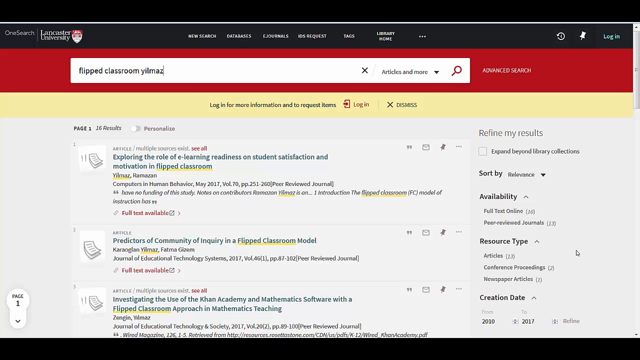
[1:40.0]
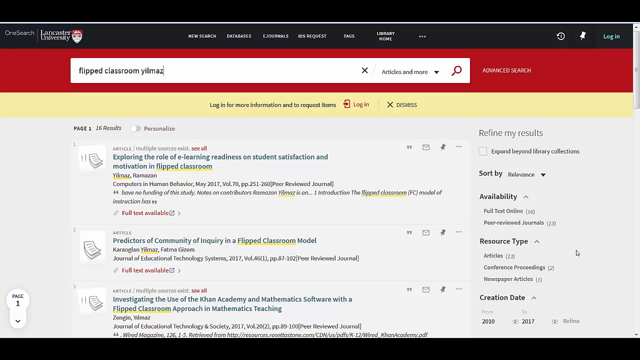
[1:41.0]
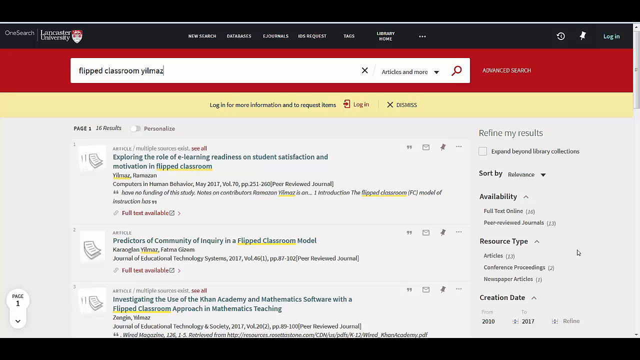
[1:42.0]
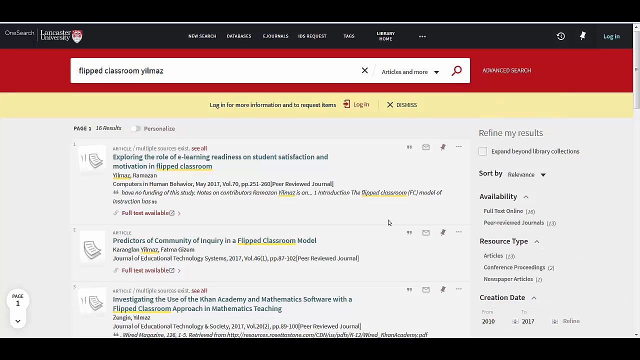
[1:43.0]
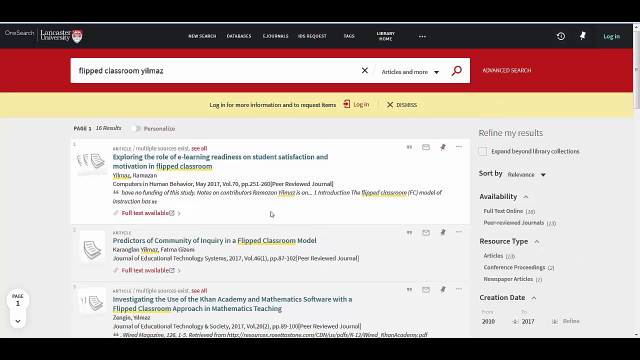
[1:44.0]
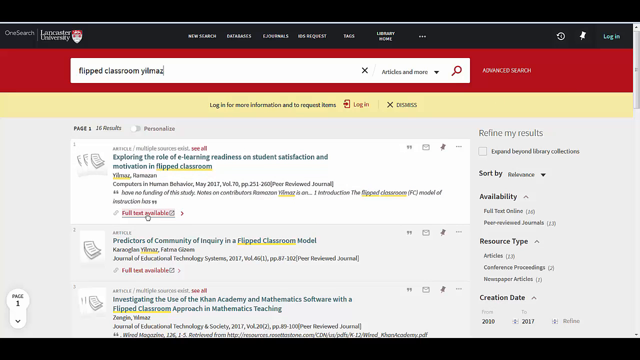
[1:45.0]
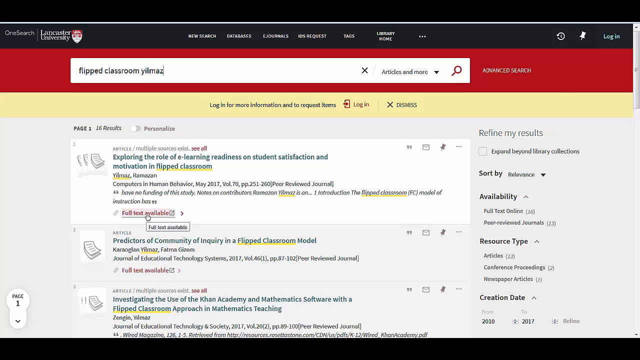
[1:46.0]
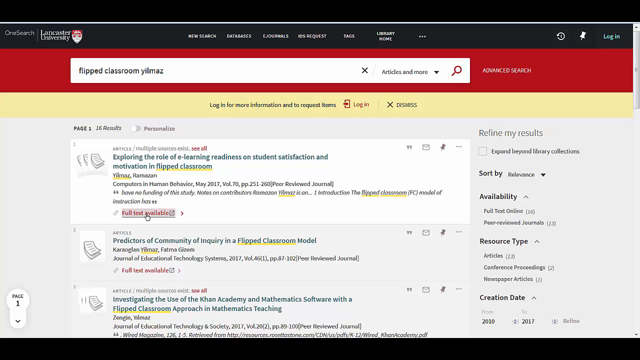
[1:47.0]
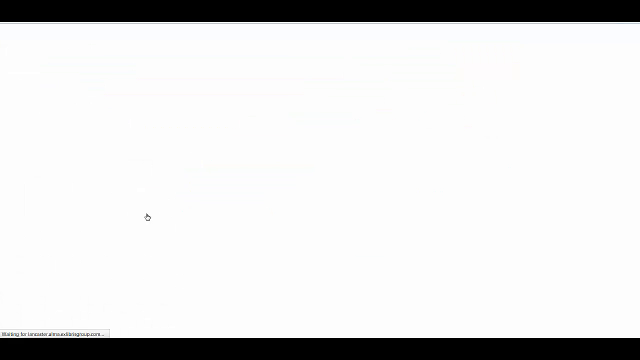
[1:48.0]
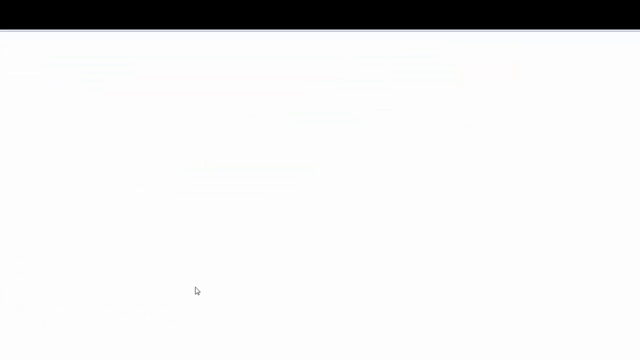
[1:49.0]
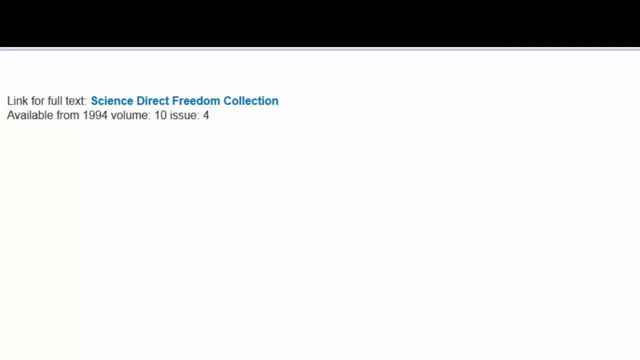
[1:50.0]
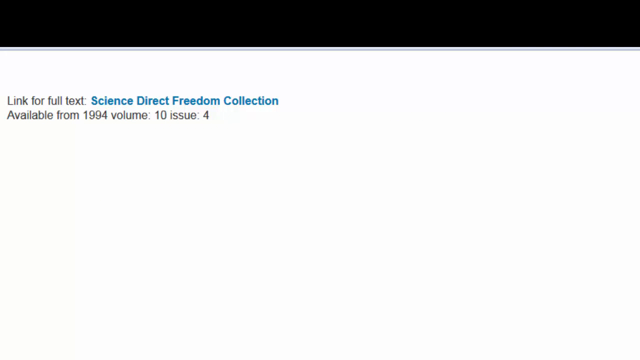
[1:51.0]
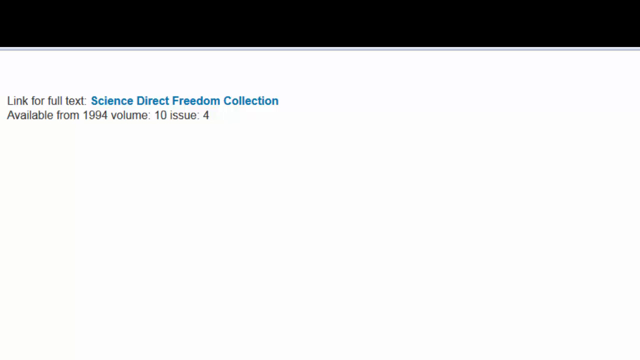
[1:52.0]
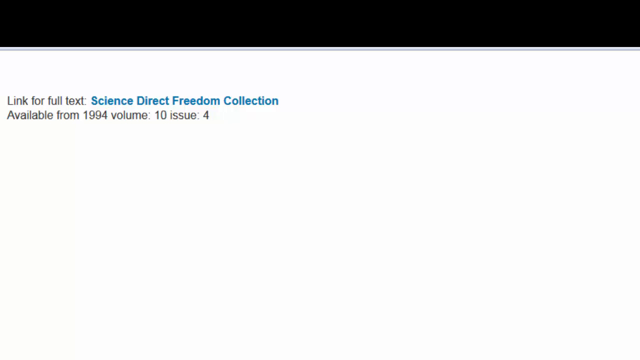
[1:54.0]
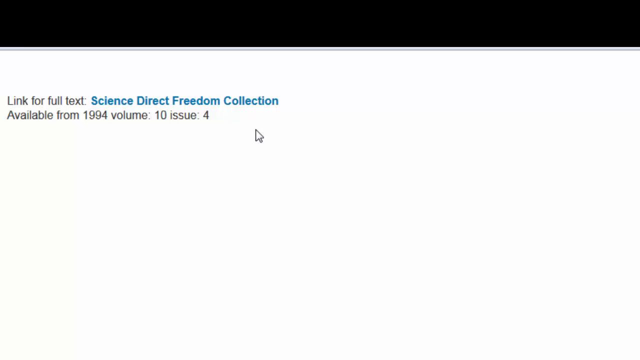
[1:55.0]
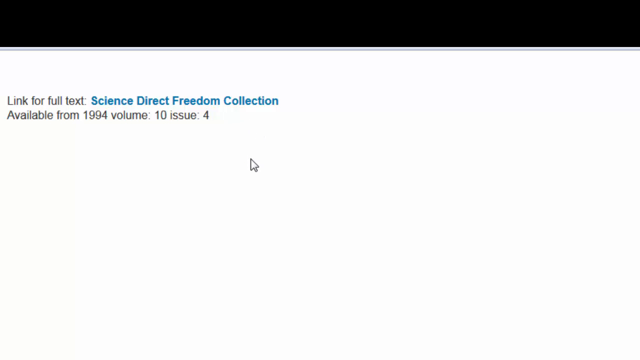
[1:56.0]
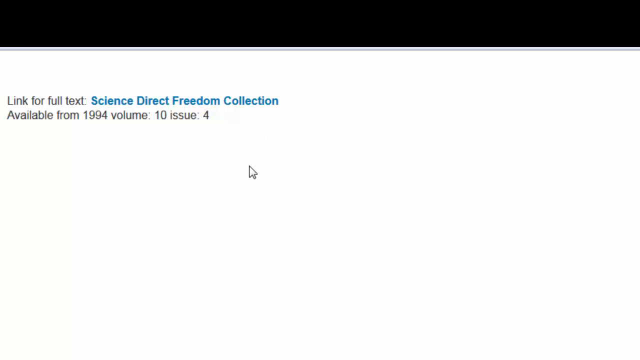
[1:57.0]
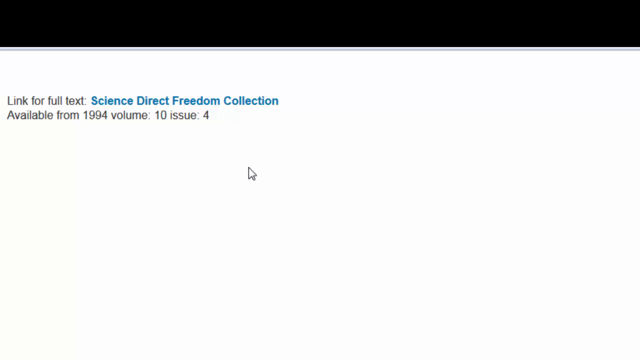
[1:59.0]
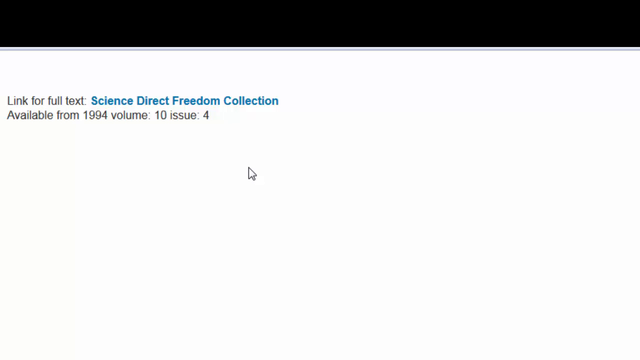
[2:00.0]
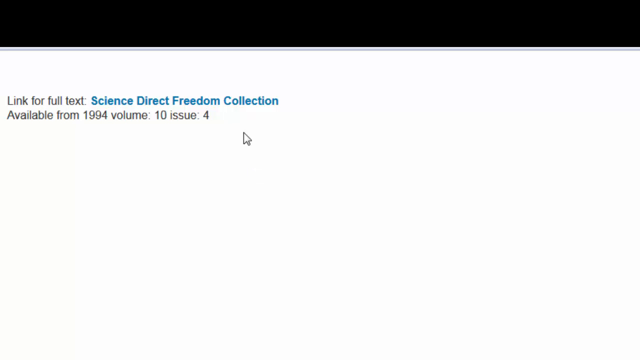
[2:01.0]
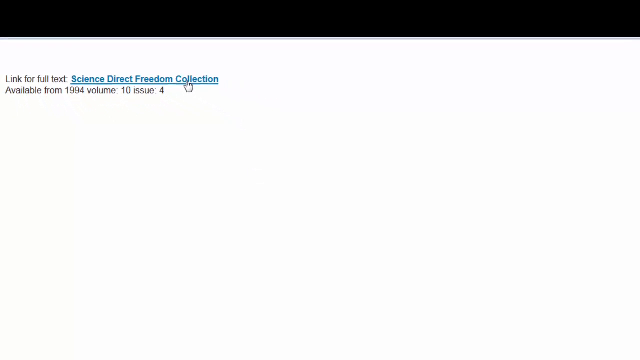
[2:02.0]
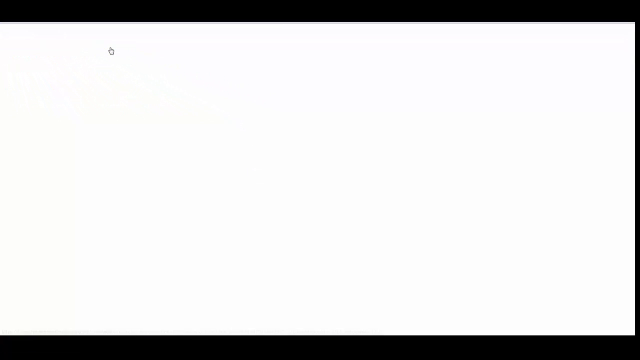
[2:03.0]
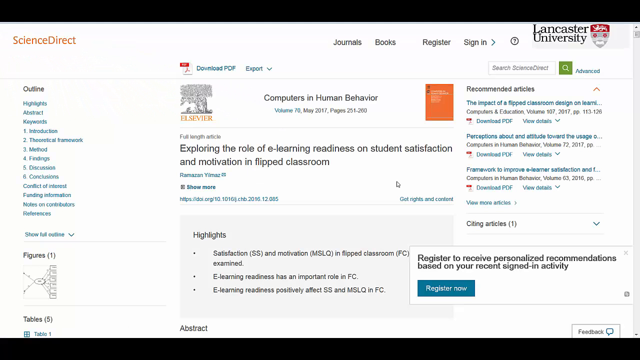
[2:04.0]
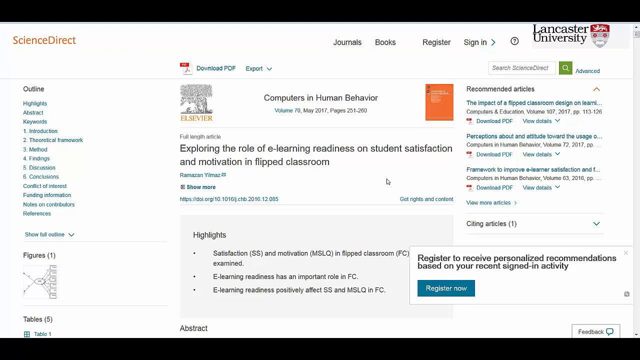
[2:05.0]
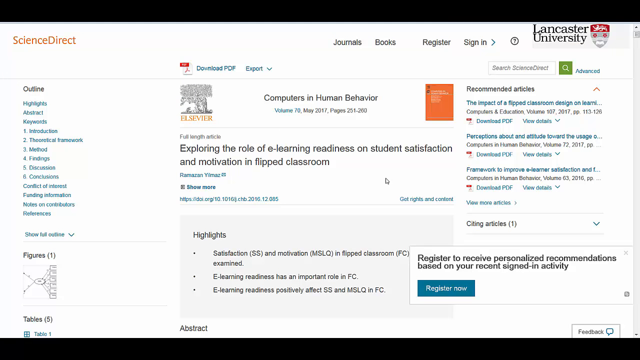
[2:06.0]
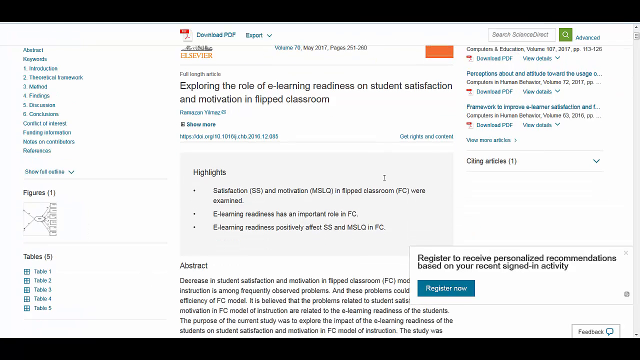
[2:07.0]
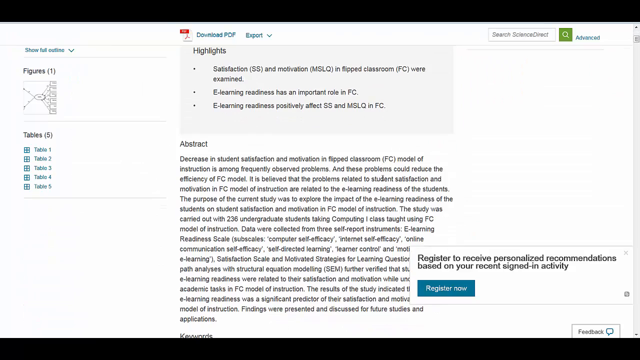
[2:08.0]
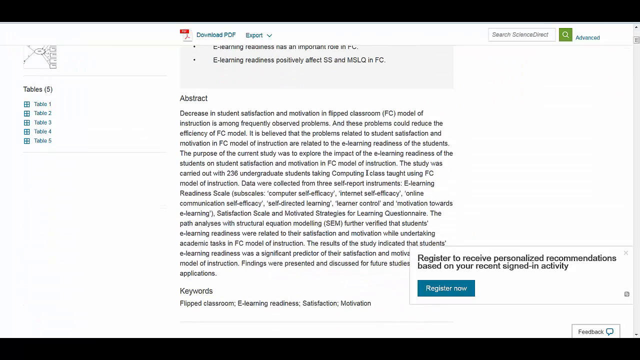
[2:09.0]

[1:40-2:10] A website page has a search bar at the top in which the words "flipped classroom Yilmaz" have been entered. Underneath, three articles pulled up by the search are listed. The top one reads "exploring the role of e-learning readiness on student satisfaction and motivation in flipped classroom"; the one beneath it is headed "predictors of community of inquiry in a flipped classroom model", and there is a third below that. The mouse moves about the screen and chooses one of the articles. The next page shows the words "link for full text" and, in a darker, brighter blue, "Science Direct Freedom Collection". Underneath are the words "available from 1994, volume 10, issue four".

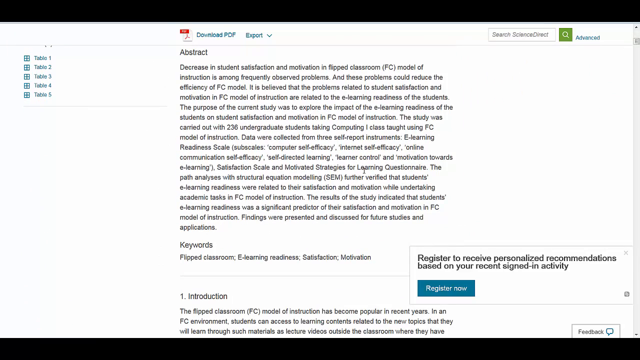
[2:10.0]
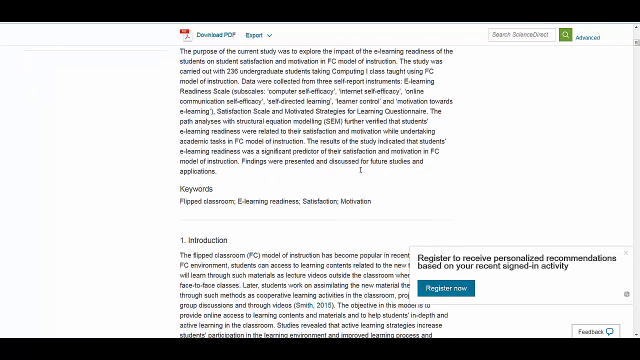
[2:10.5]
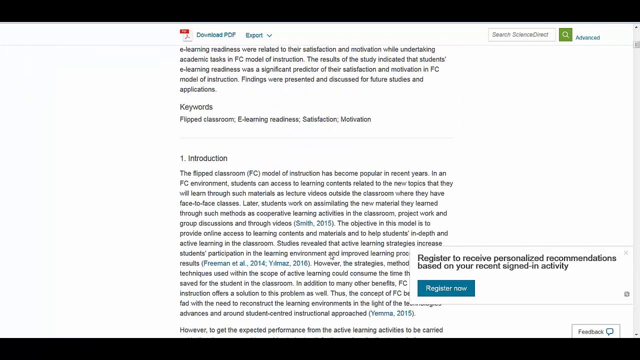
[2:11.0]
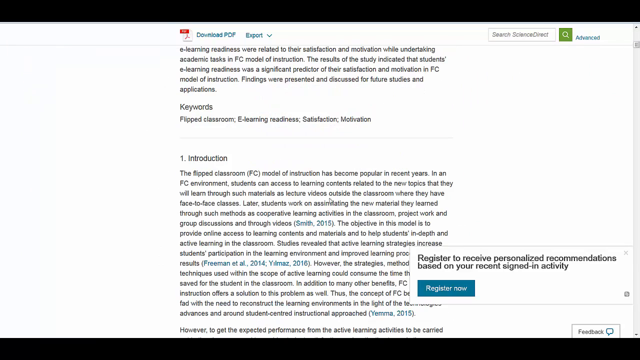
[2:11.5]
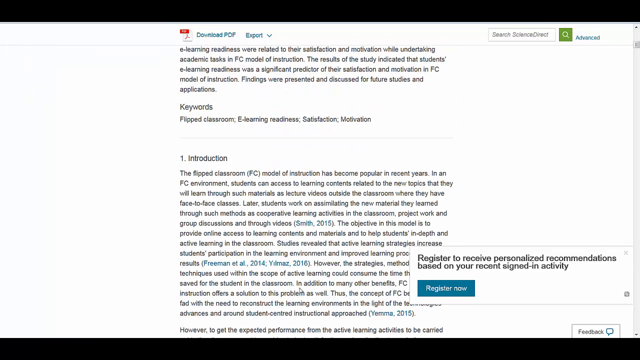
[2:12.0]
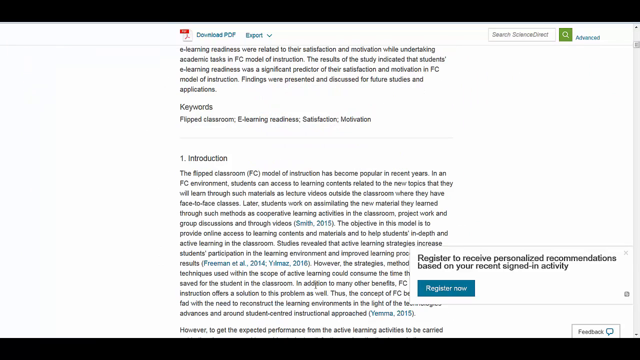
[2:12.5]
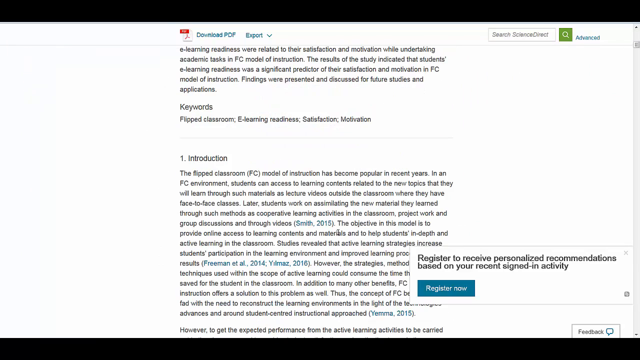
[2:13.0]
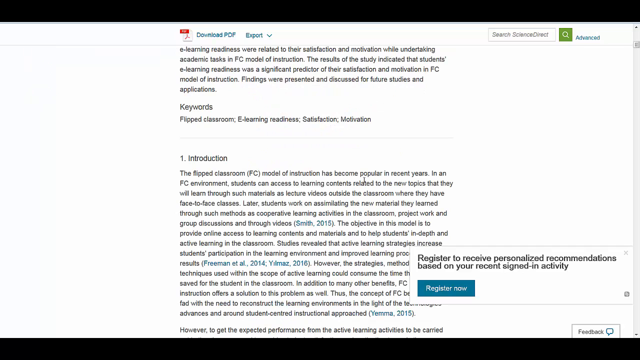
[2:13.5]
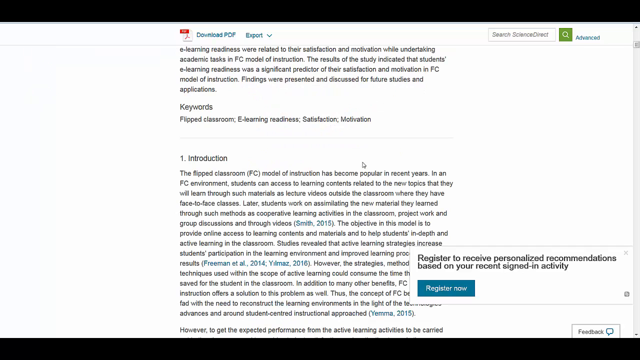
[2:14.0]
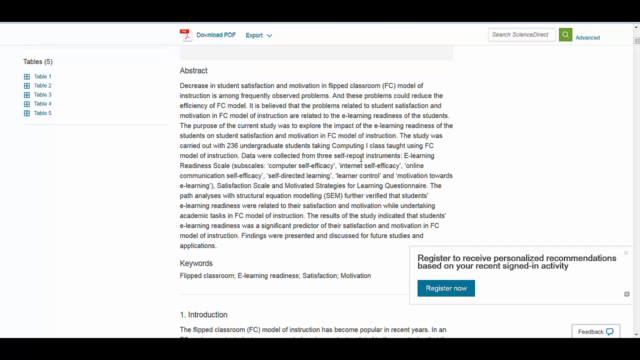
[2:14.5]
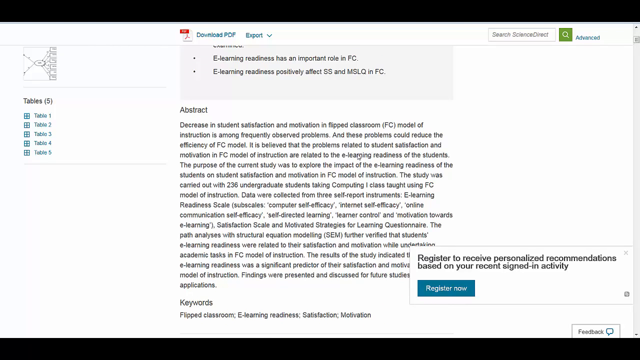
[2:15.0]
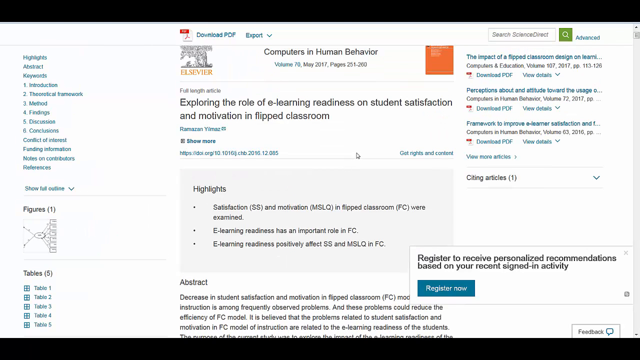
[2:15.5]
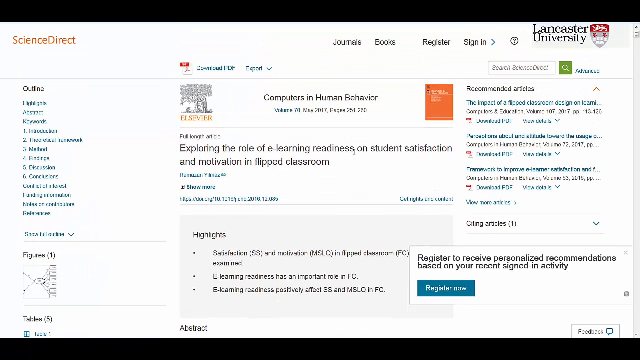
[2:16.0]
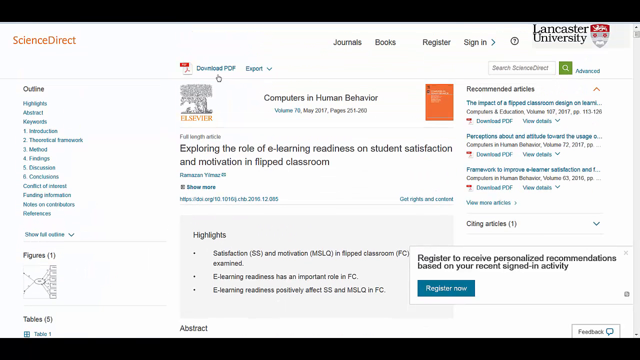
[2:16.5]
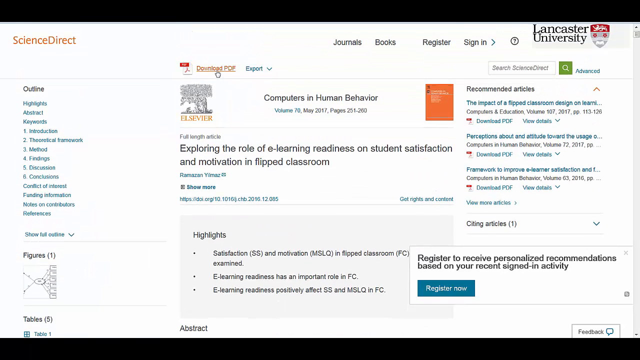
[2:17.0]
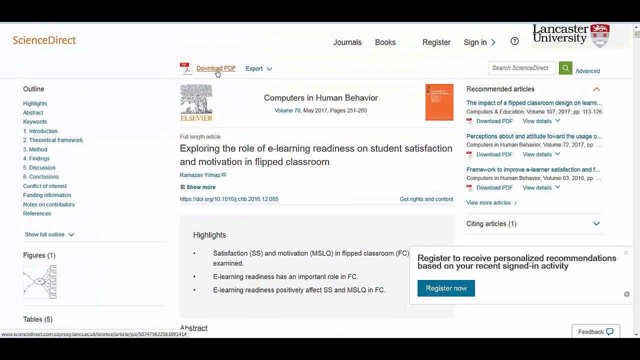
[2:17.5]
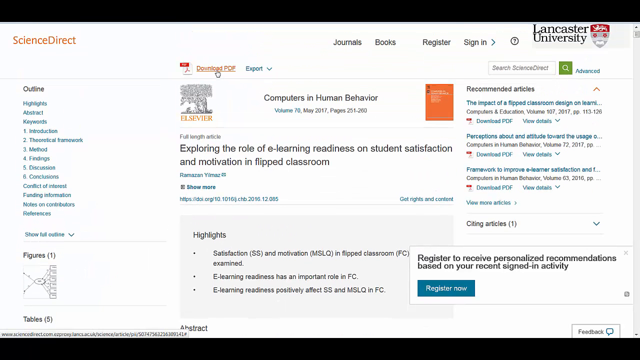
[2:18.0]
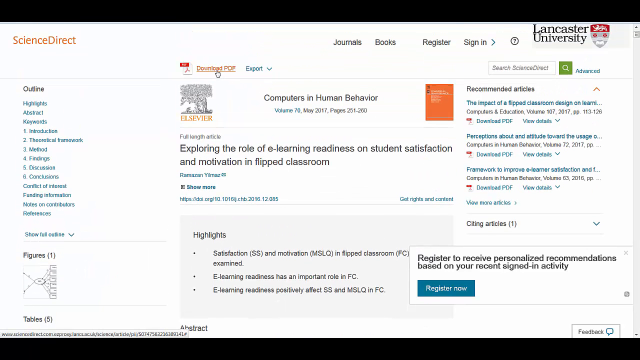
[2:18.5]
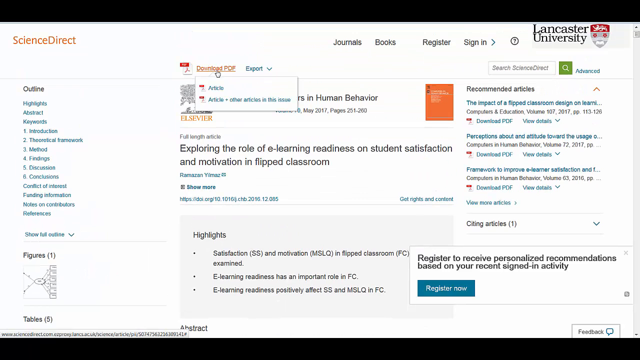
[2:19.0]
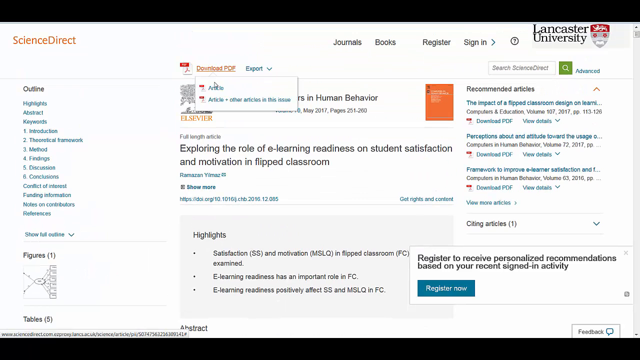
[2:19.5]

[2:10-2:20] A screen shows an academic article called "Exploring the role of eLearning readiness on student satisfaction and motivation in flipped classroom". The person viewing it scrolls up and down through the different elements of the article, such as the abstract and the introduction; the words are very small and difficult to read. The article appears to be from Science Direct, accessed through the Lancaster University website, and the person appears to have searched for it and is now looking at it. It seems the video is showing how to use the university website's search system.